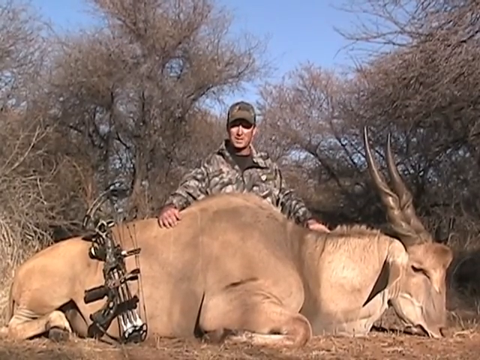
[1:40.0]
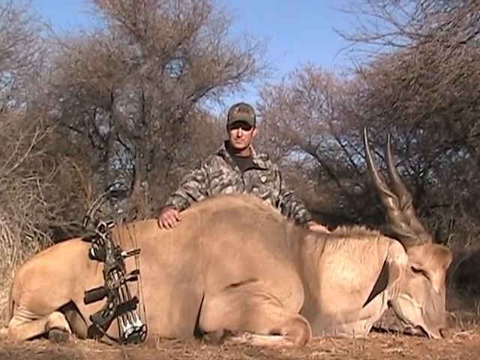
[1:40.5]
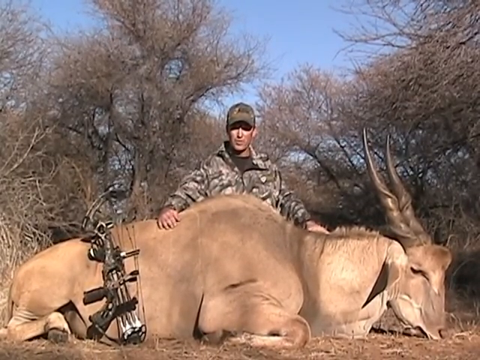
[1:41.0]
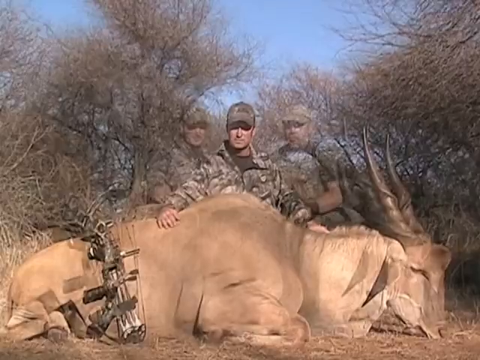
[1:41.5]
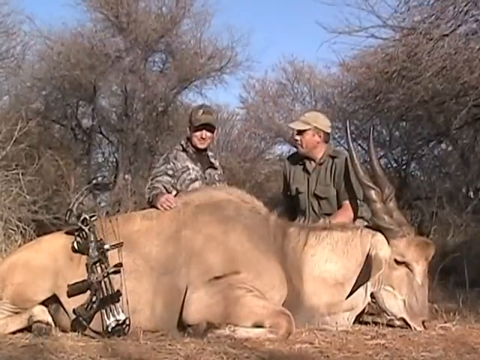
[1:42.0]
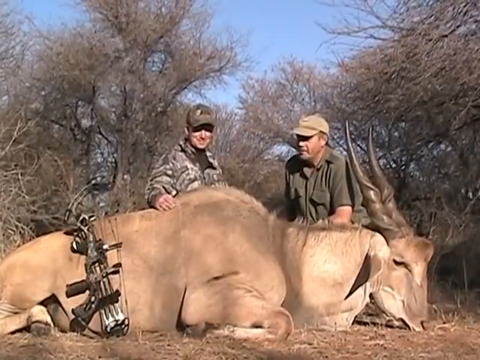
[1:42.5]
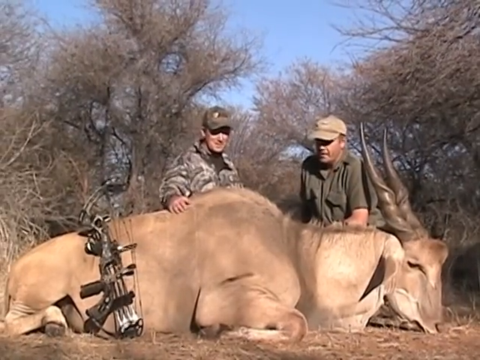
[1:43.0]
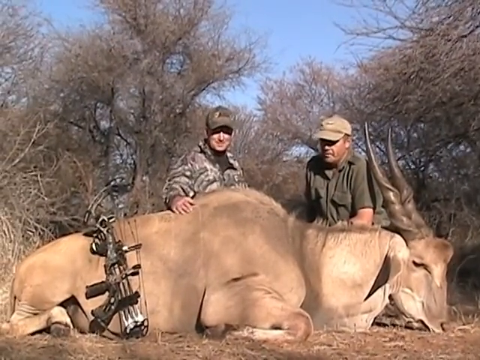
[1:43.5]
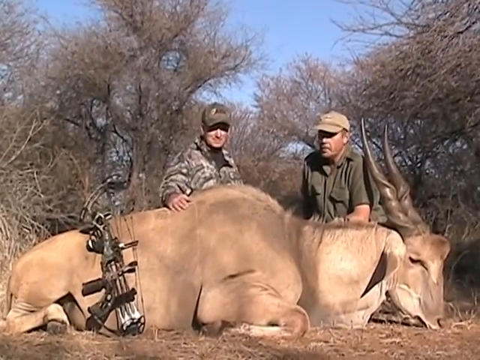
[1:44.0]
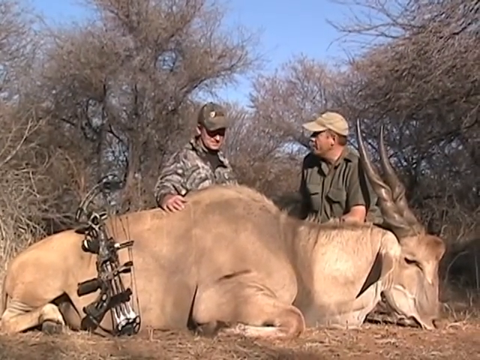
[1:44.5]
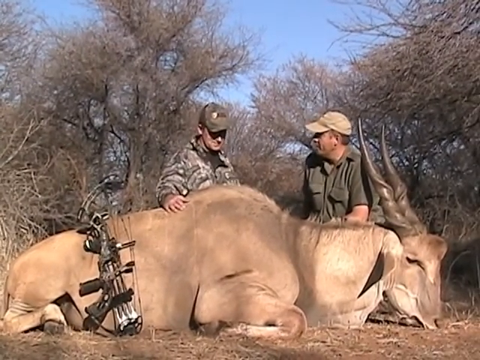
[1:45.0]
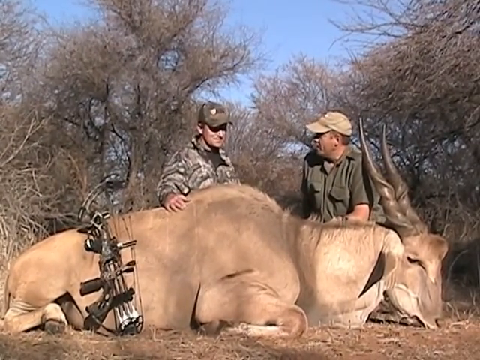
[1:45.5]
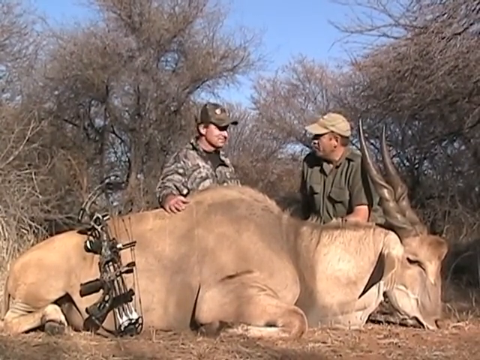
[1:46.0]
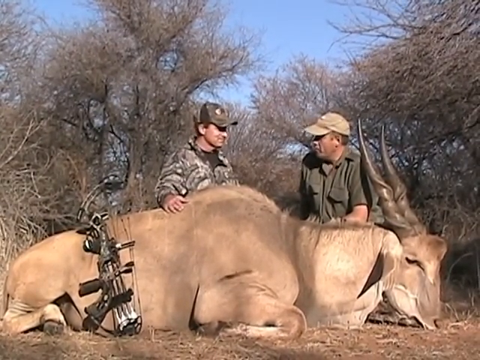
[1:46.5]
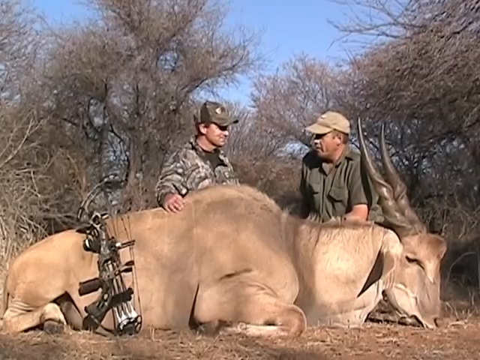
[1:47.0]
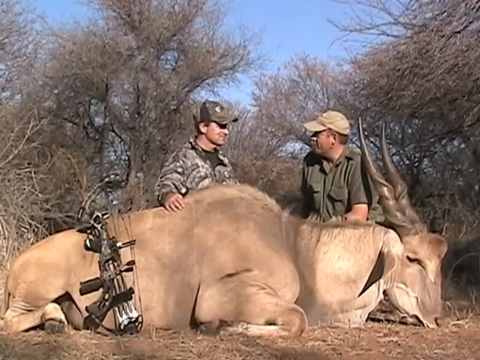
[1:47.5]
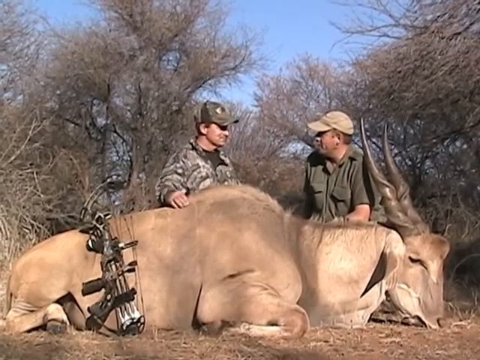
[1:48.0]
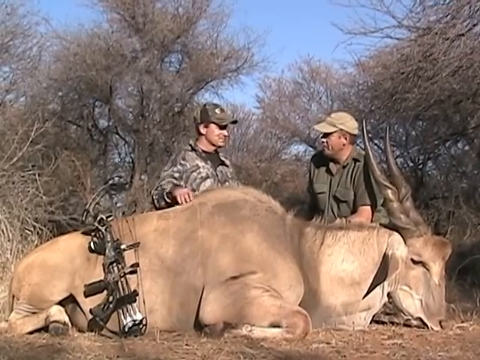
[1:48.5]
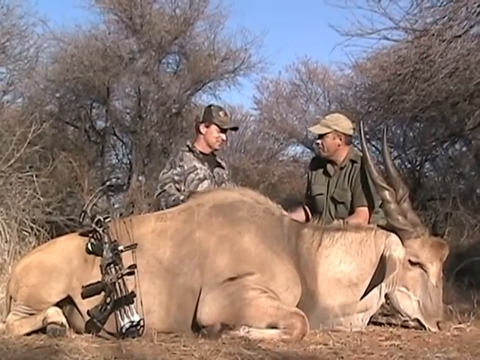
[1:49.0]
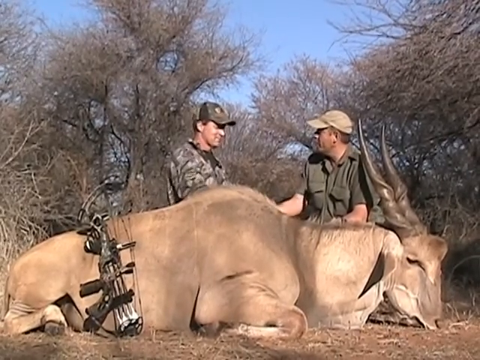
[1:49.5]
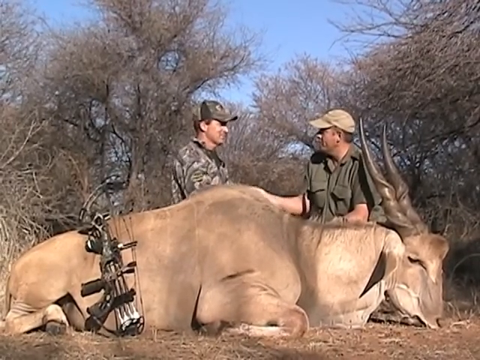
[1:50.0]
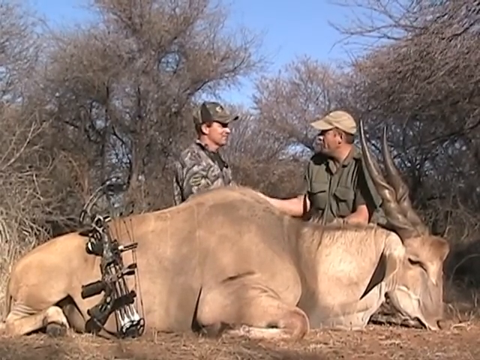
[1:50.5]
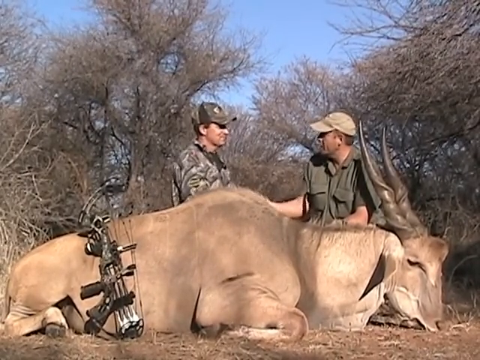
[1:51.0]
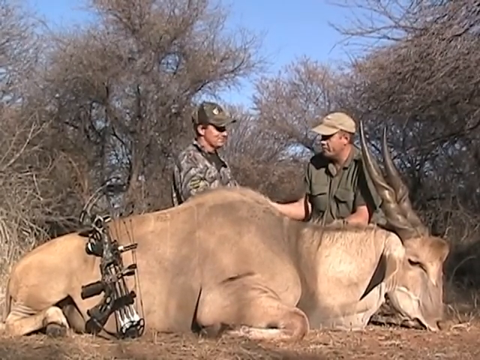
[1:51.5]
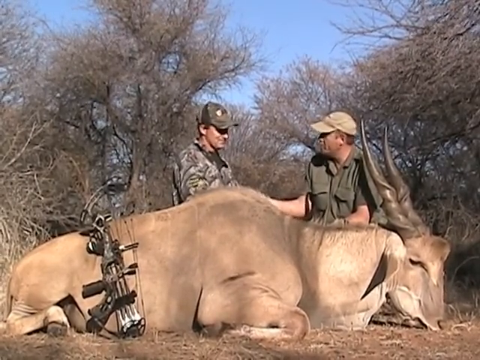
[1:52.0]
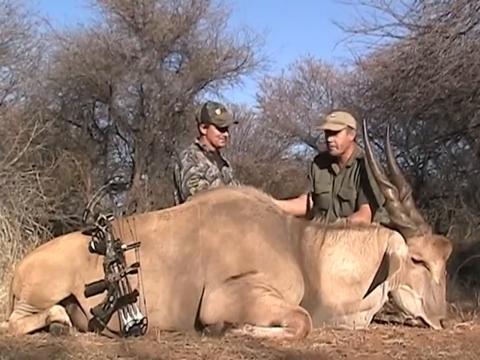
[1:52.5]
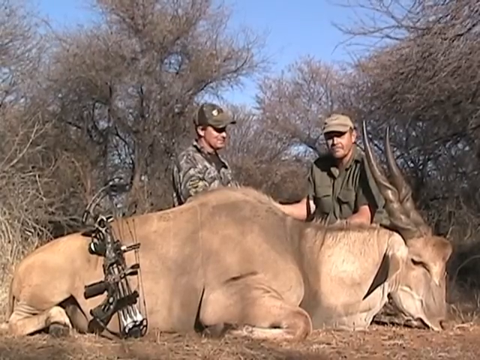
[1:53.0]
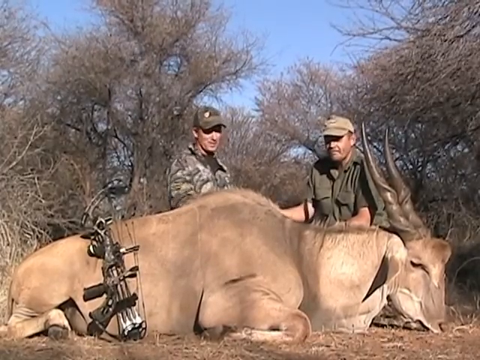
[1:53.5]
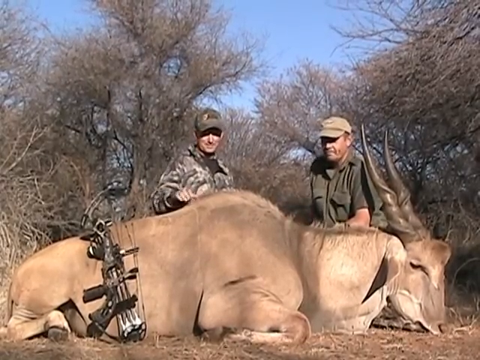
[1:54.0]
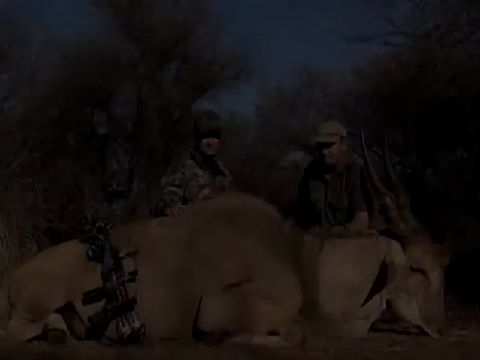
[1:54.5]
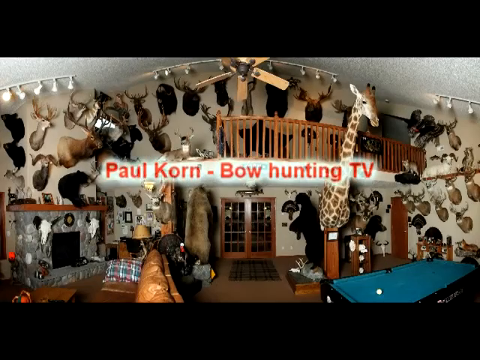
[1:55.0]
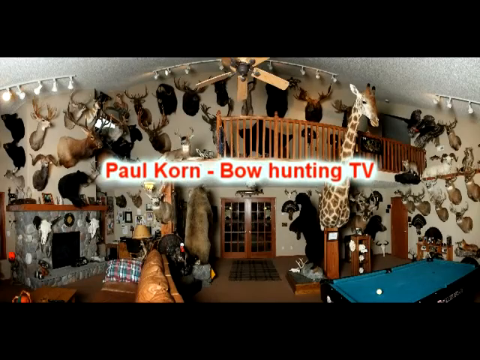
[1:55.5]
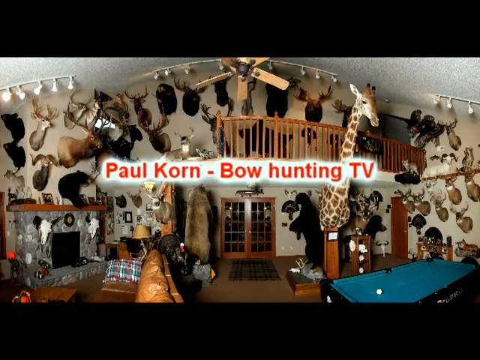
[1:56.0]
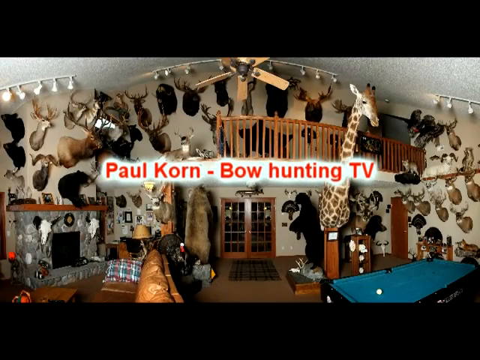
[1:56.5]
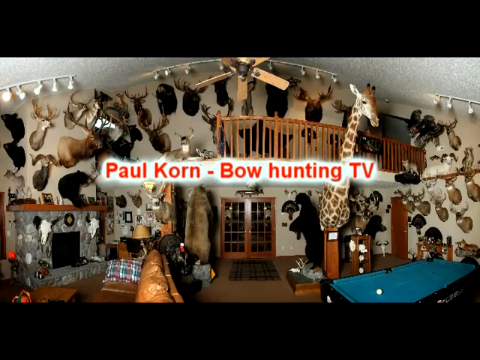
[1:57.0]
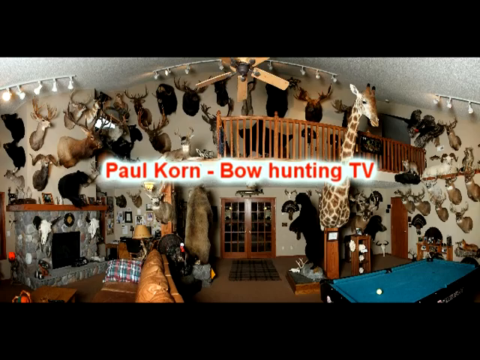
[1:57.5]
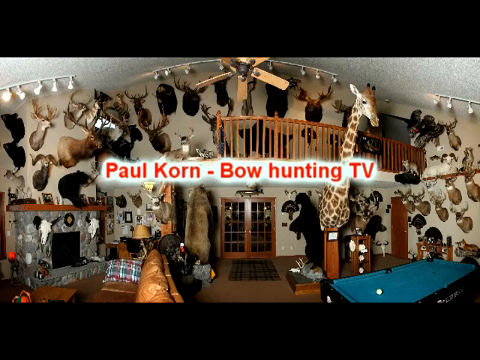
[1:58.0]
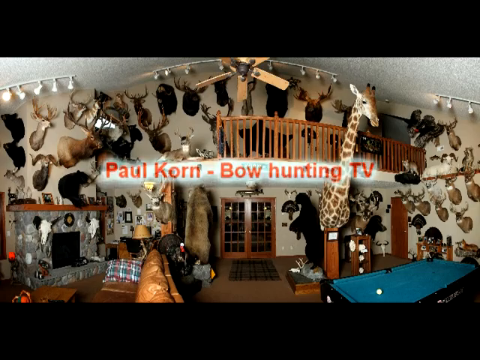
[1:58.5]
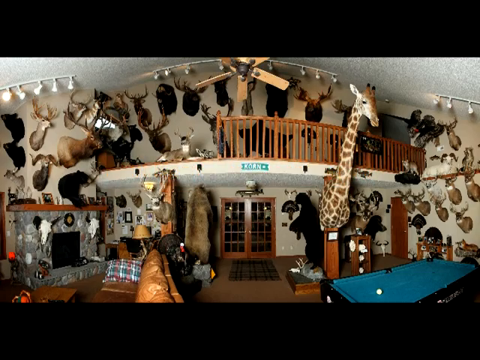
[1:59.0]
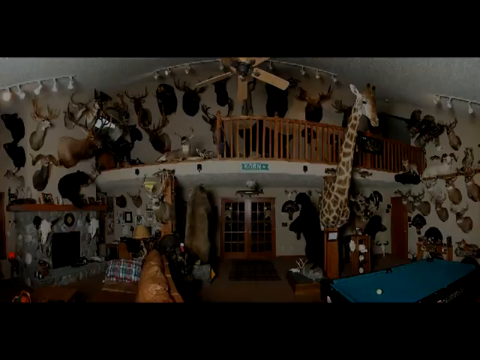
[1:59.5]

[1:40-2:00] The hunter speaks again and is then joined by another man in hunter gear. This man is not wearing camo; he wears a plain green military-style shirt and a lighter cream-coloured hat. Both stood over the hunted springbok, they turn to each other while talking. The man on the right has his left arm leaning on the springbok's neck. The two hunters then turn to each other and shake hands, smiling and nodding their heads. Both turn to the camera before the video fades to another still image, in which the hunter on the left places his hand on the back of the springbok as it fades out. The image from the start of the video then appears once again: a big room full of taxidermy of exotic wild animals, with the text "Paul Korn Bowhunting TV" displayed in red with a white background around the text.